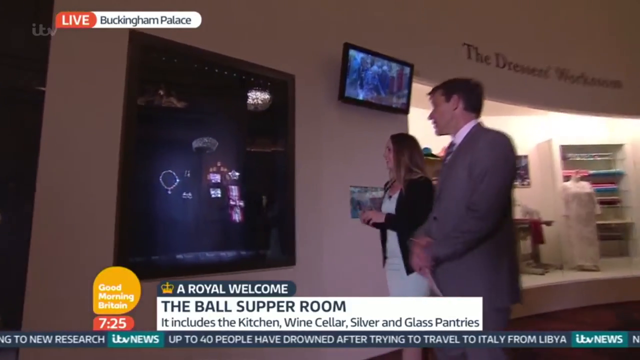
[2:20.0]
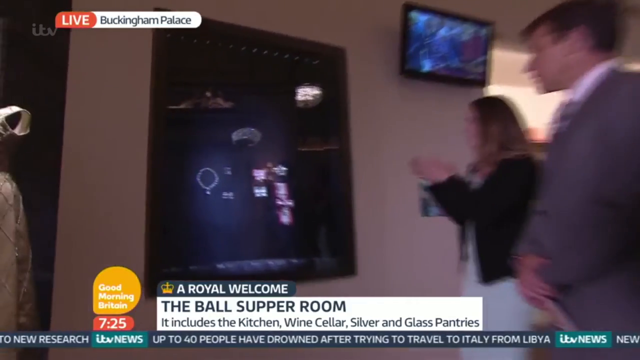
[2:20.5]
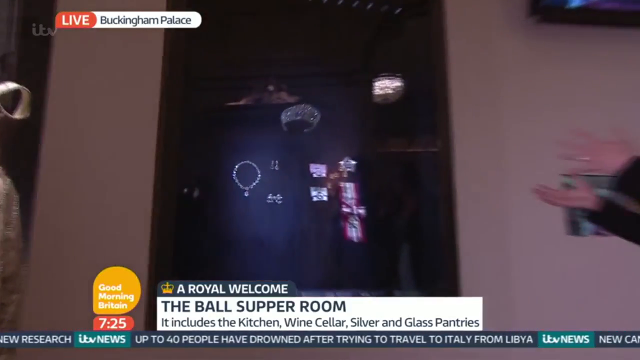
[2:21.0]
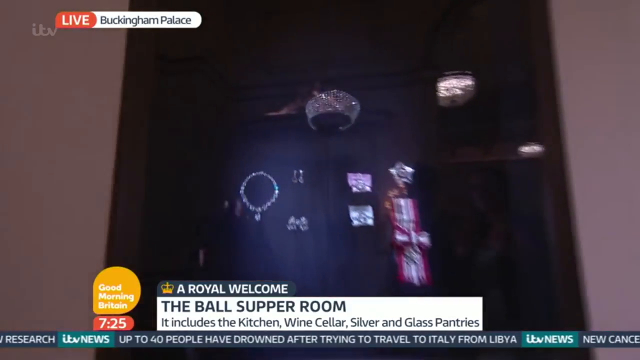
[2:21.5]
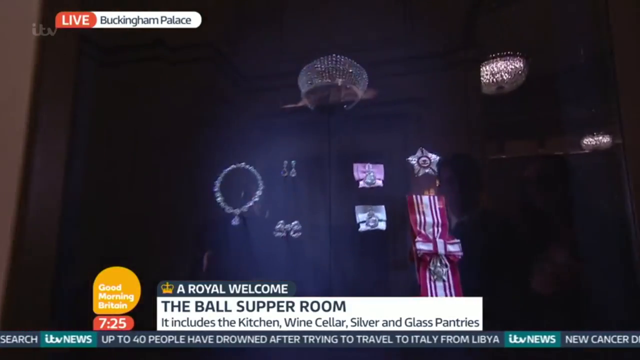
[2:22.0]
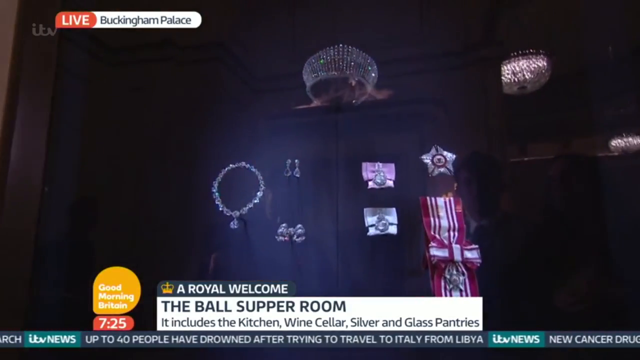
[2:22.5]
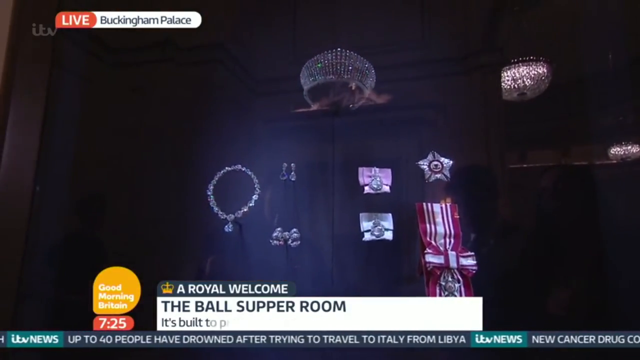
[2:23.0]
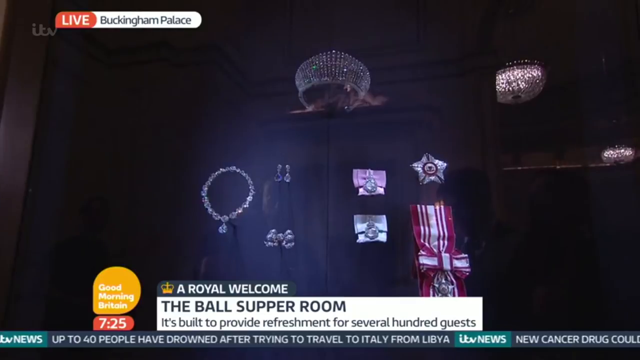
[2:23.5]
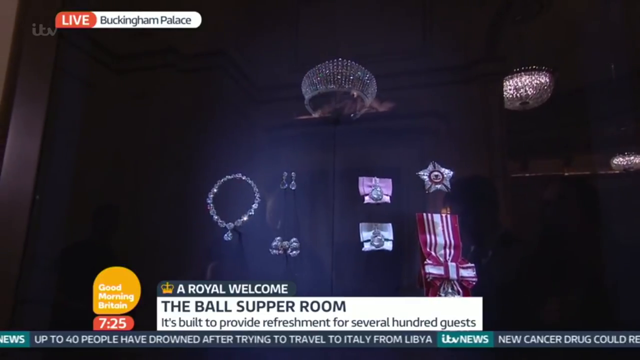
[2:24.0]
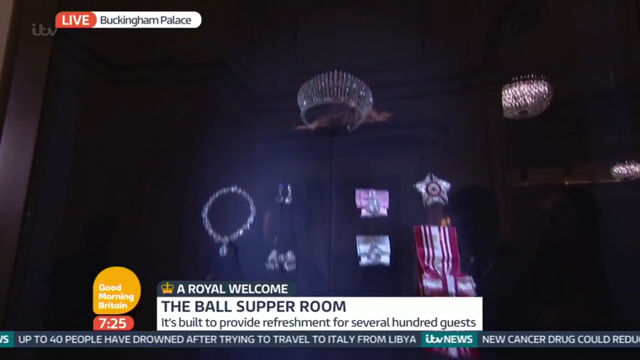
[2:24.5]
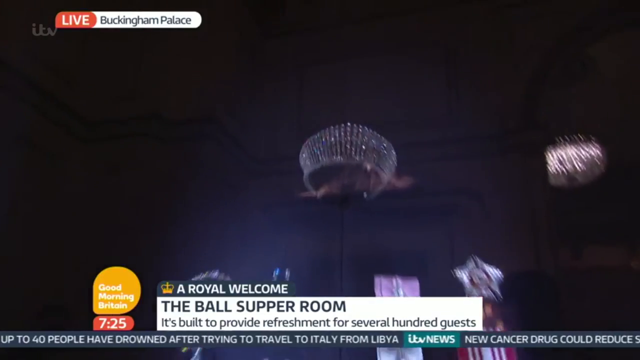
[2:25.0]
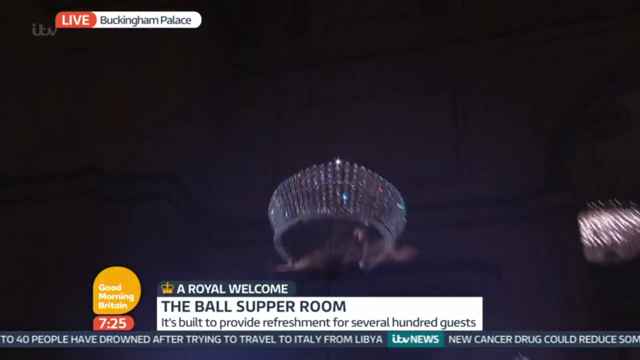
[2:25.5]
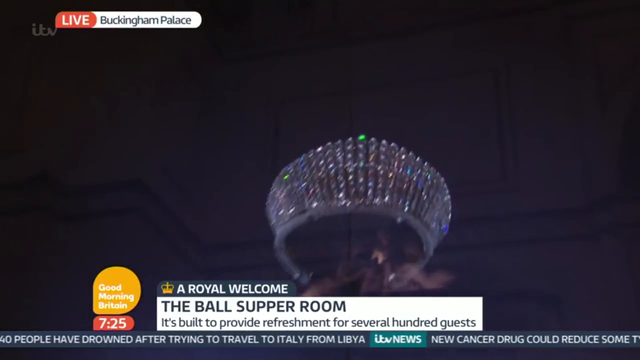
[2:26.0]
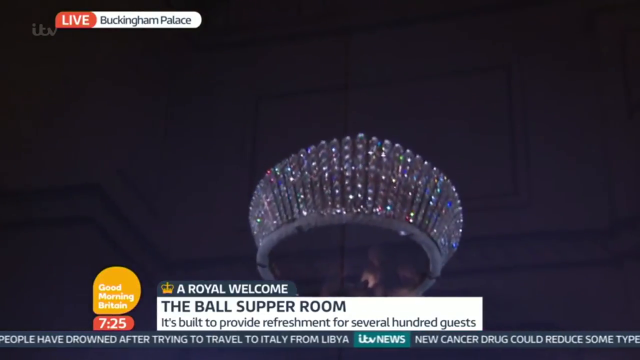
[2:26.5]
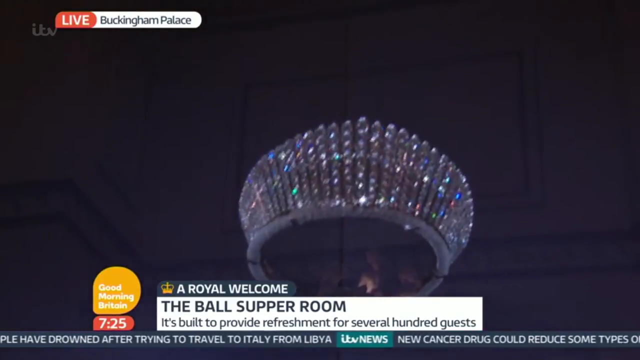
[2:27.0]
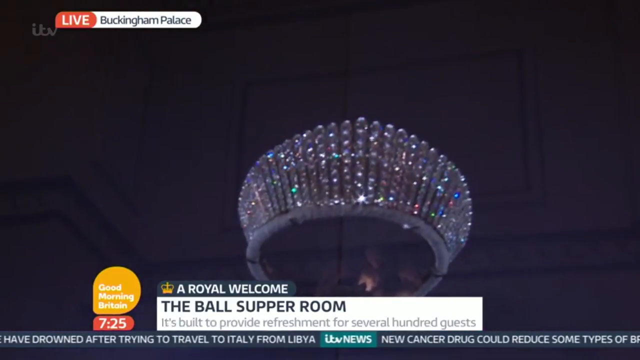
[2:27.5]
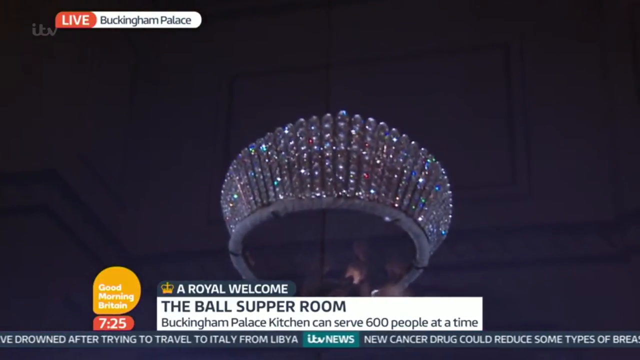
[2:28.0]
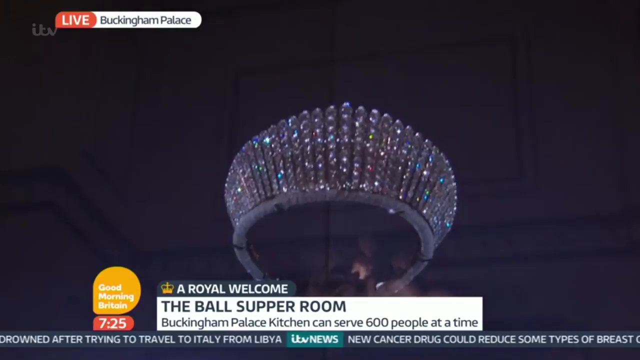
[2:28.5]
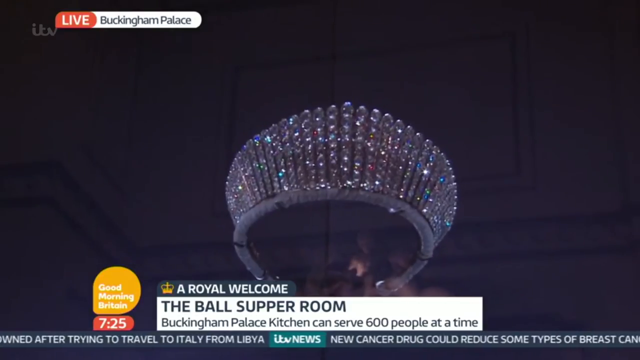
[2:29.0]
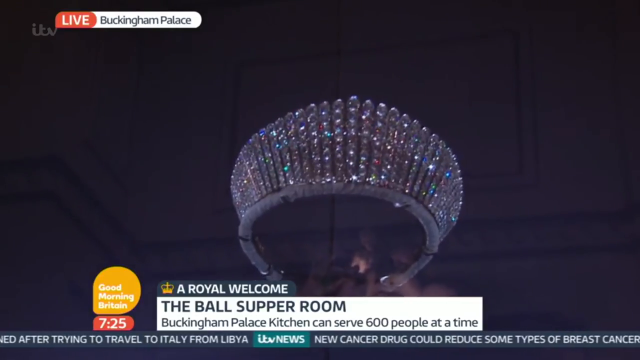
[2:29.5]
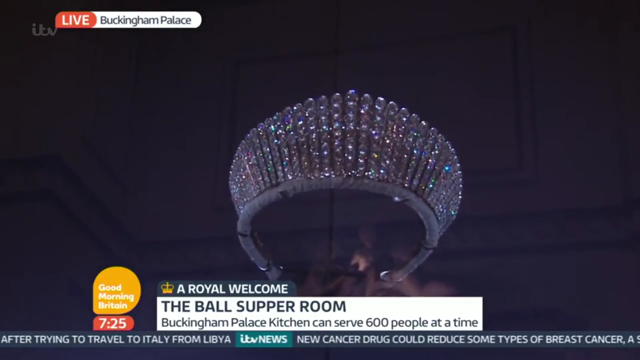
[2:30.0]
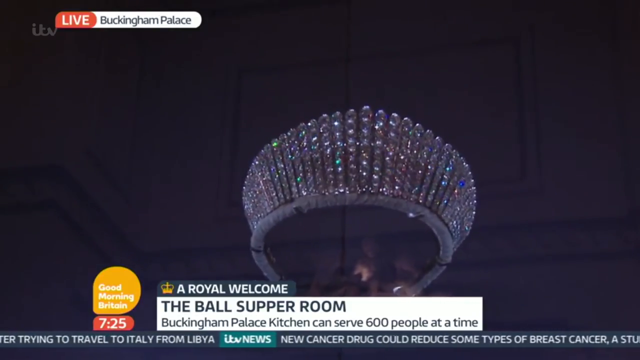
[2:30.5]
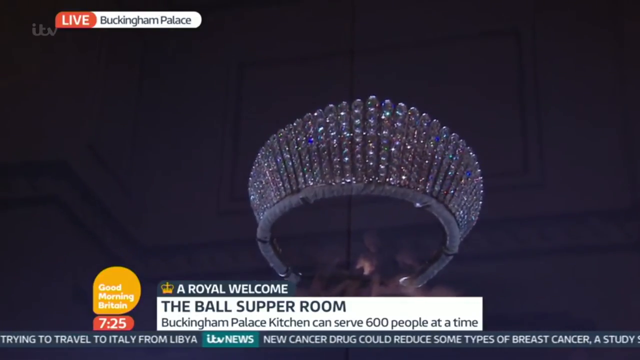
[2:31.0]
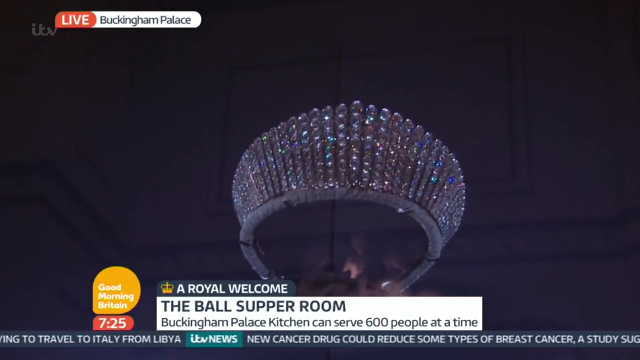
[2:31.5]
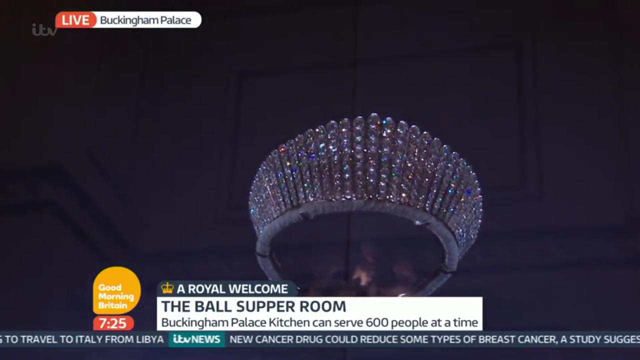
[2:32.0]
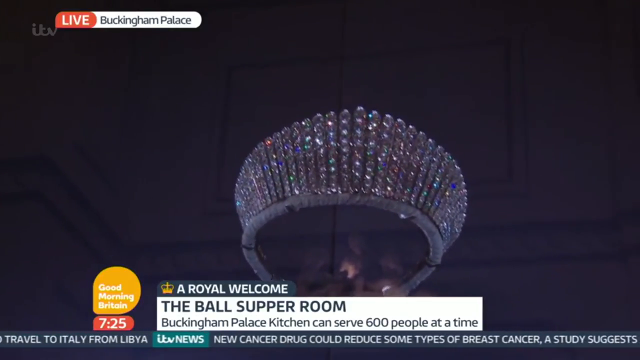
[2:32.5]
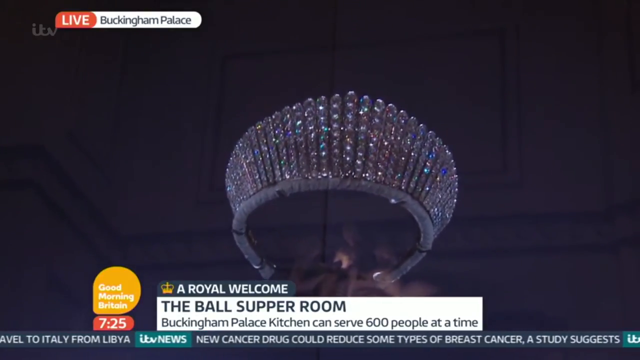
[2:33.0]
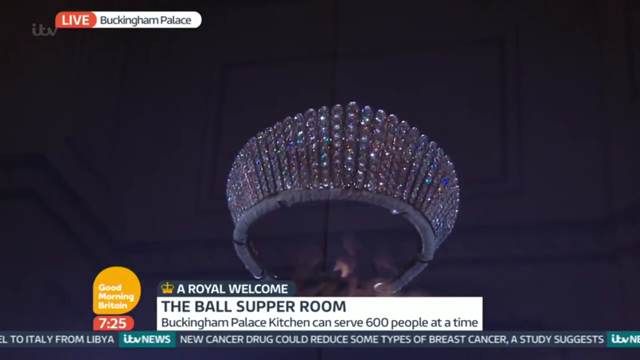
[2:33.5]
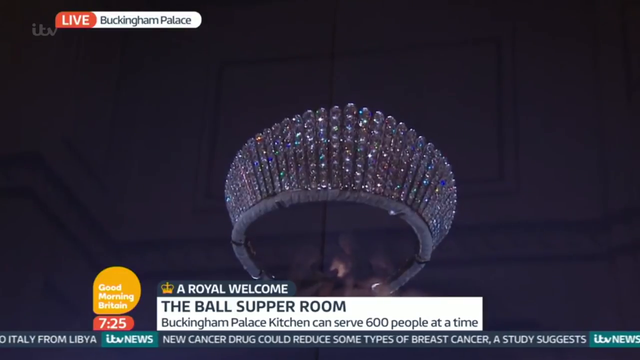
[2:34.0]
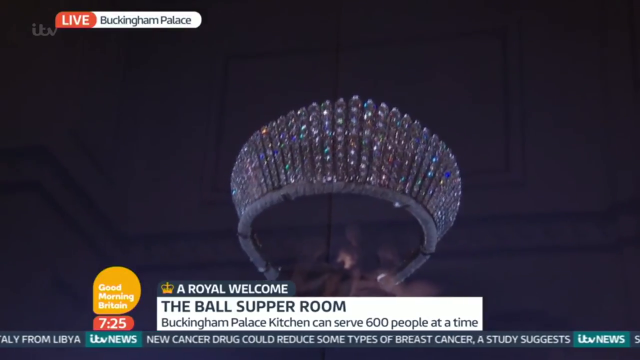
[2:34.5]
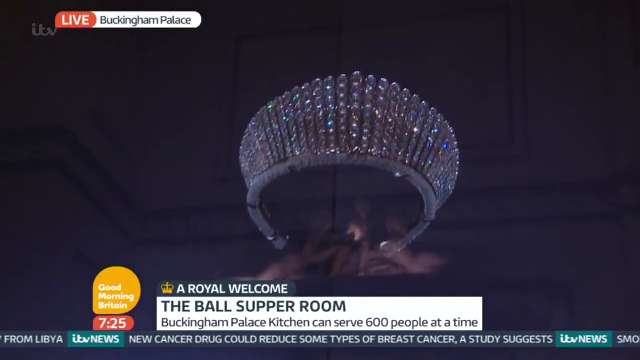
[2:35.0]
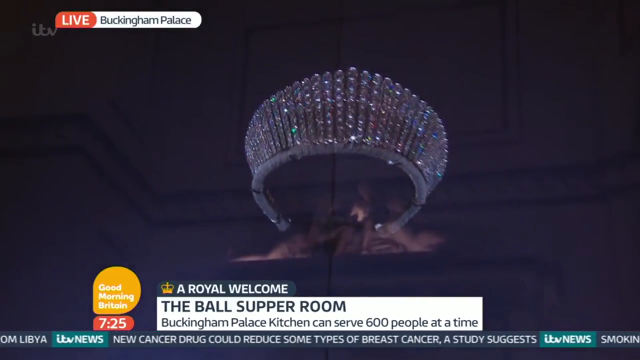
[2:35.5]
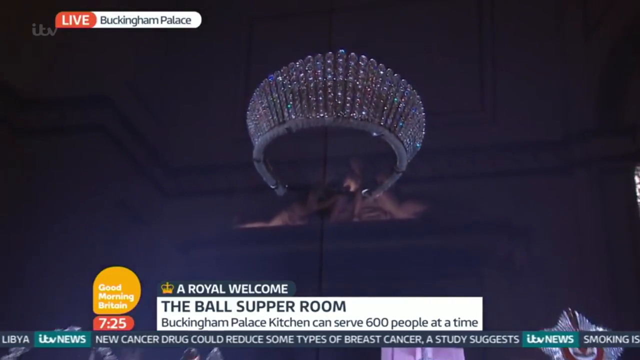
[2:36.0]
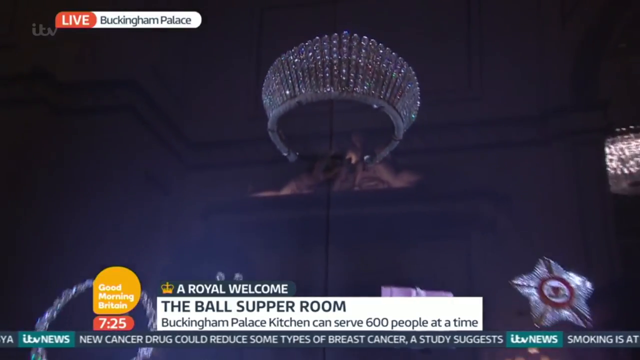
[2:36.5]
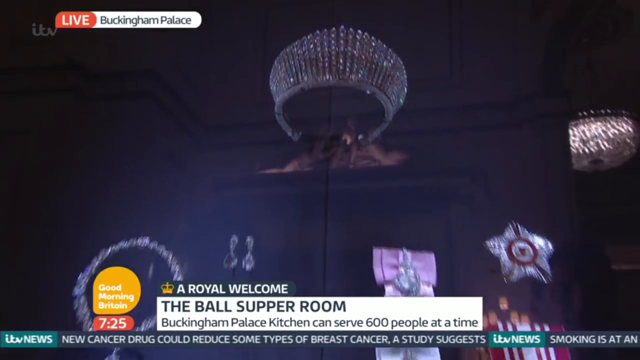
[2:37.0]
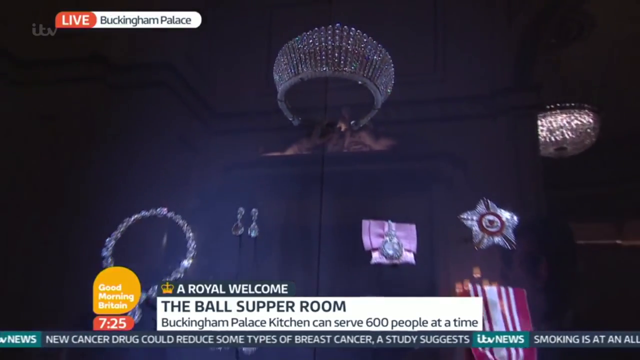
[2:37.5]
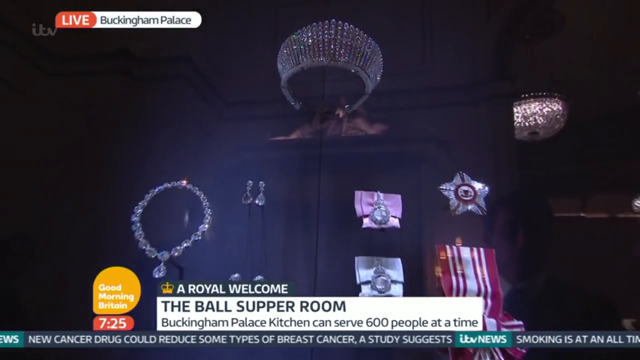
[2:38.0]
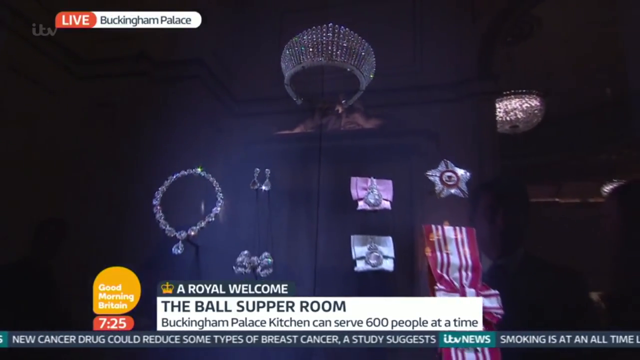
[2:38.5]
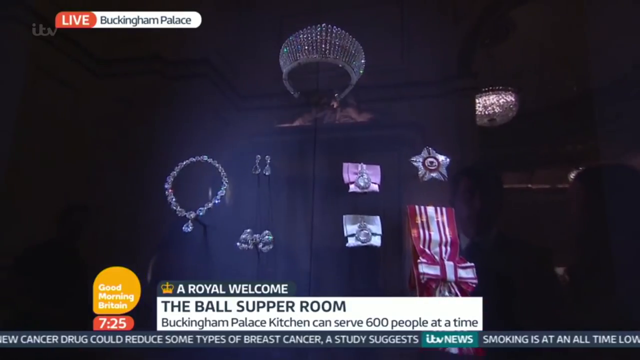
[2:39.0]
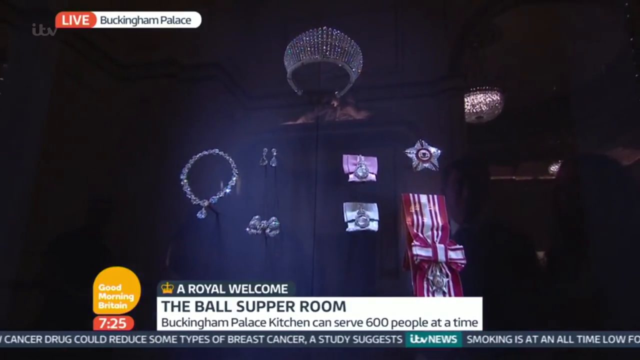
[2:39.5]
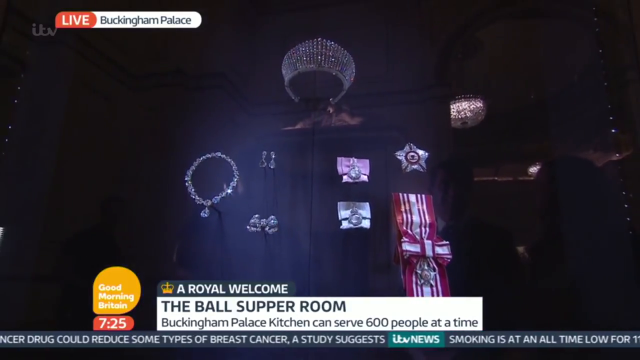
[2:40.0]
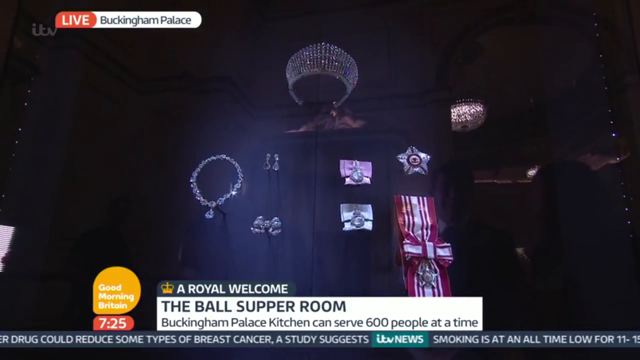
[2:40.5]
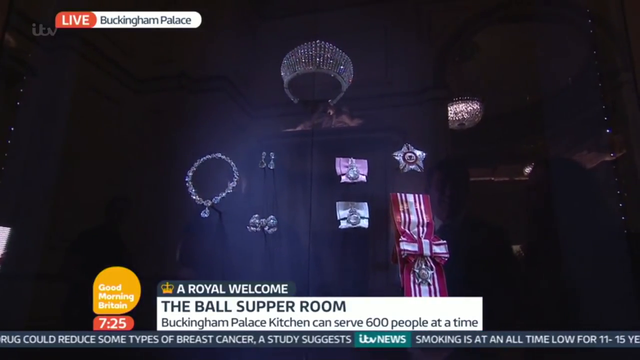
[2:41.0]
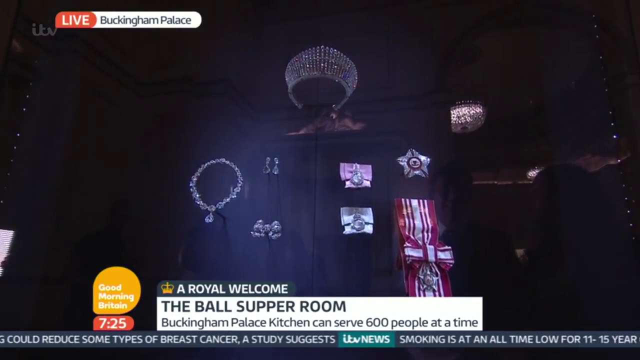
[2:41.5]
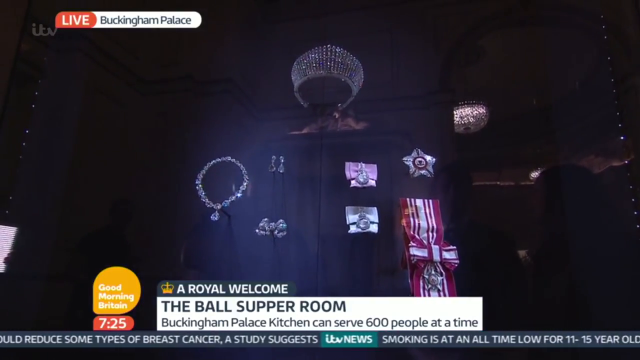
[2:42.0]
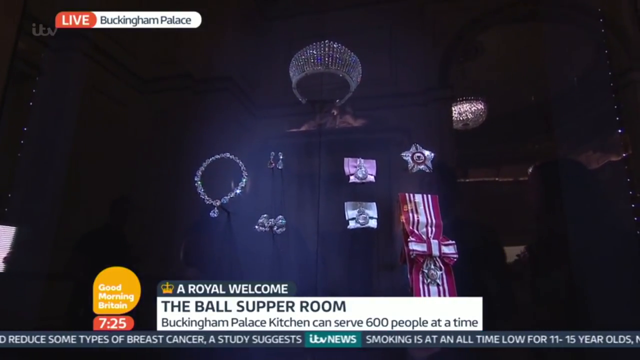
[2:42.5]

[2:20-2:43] In the bottom left are the words "Good Morning Britain" in an orange bubble, with the time "7:25" below in a horizontal red bubble. To the right, a white rectangle has the words "The Ball Supper Room" at the top and a sentence stating "It includes the kitchen, wine cellar, silver and glass pantries". At the top of the white rectangle is a blue rectangle about half its size, with a yellow drawing of the British crown on the left and the words "A Royal Welcome" to the right. In the top left are the words "Live Buckingham Palace". The woman, on the left, wears a black coat with a white dress underneath; to her right, the man wears a gray suit, white shirt and dark tie. They stand to the right of a glass exhibit set in a white wall, with sparkling jewelry hanging on the wall inside. The camera zooms in on the jewelry until the people are no longer visible. At the top of the exhibit is what appears to be a sparkling bracelet. On the bottom left is a necklace with a diamond at the bottom, and at the top right a pair of diamond earrings. On the bottom right is something that almost looks like a crystal bow tie. On the far right is a shiny, metallic five-pointed star with what looks like a red and white striped ribbon hanging below it. To the left of the star is a rectangular, shiny, slightly pink piece of jewelry, and below it another piece that looks exactly like it but more silver. The camera zooms in on the bracelet at the top of the display, seen from underneath, showing multiple rows of sparkling diamonds, then zooms back out to show all the other pieces of jewelry.